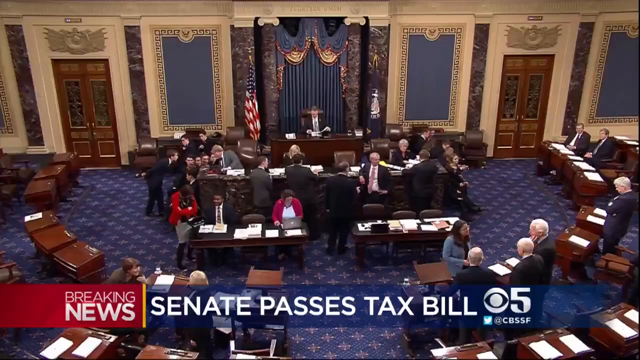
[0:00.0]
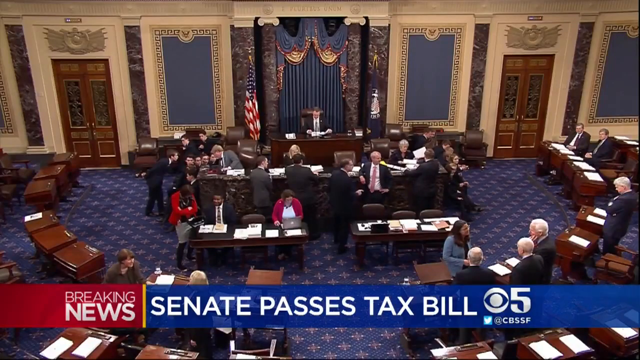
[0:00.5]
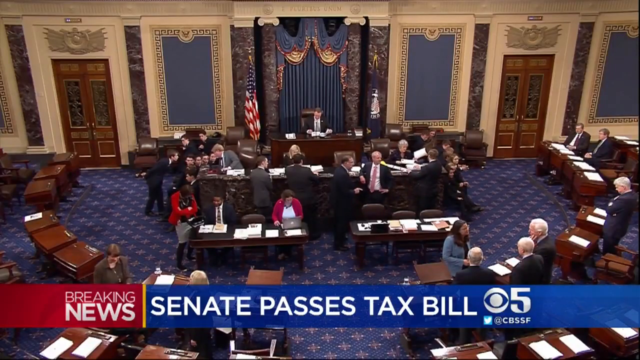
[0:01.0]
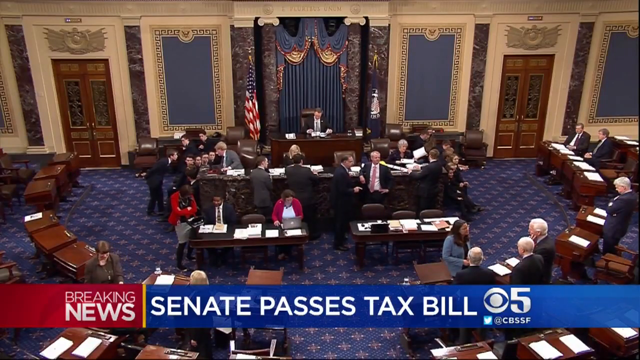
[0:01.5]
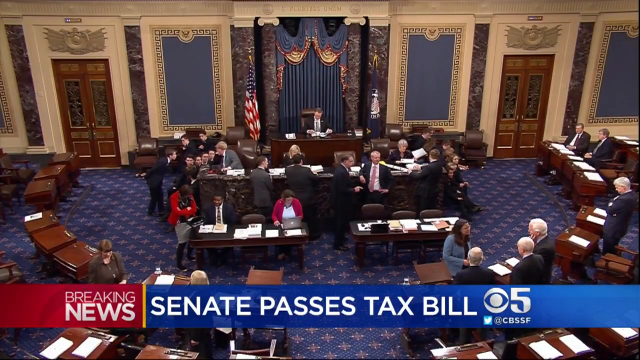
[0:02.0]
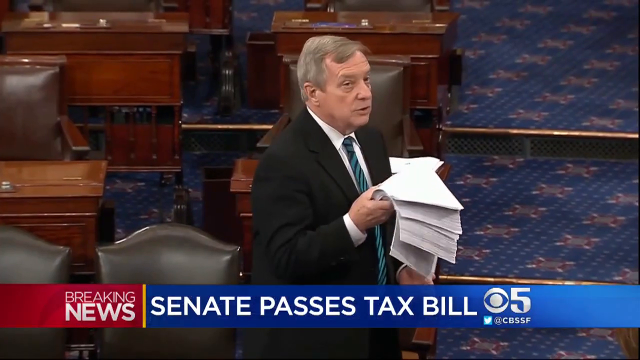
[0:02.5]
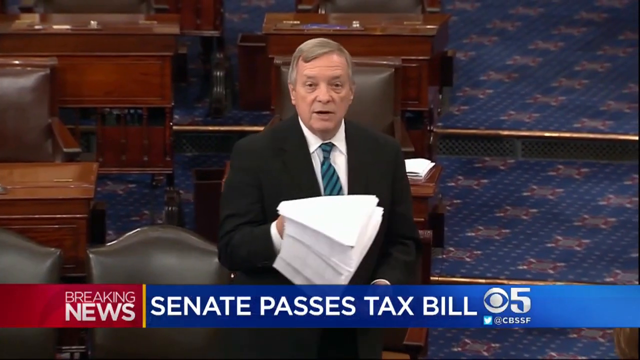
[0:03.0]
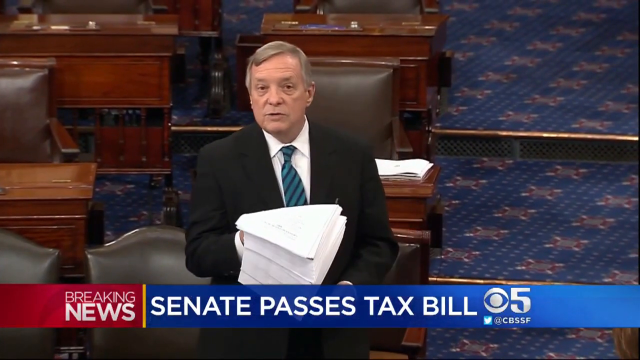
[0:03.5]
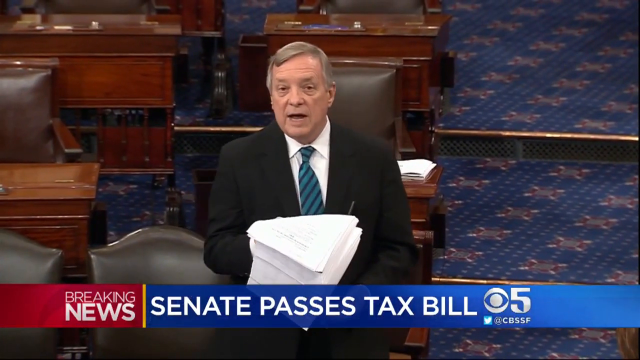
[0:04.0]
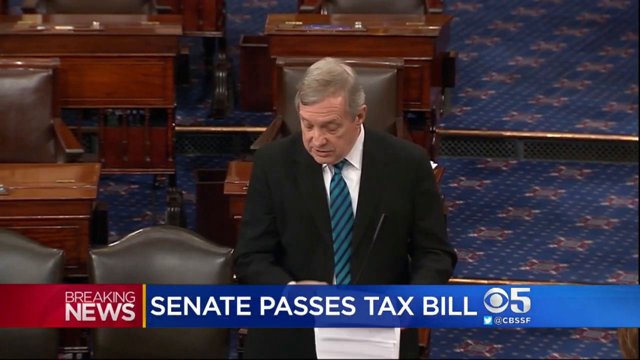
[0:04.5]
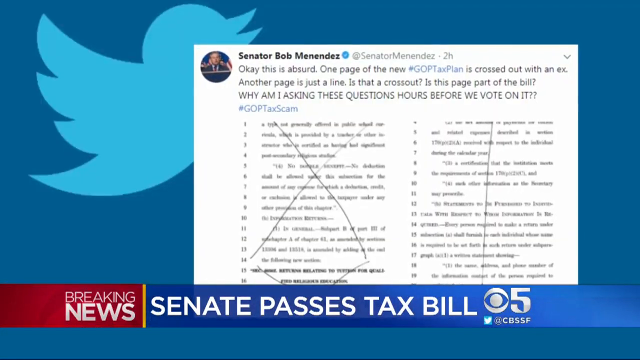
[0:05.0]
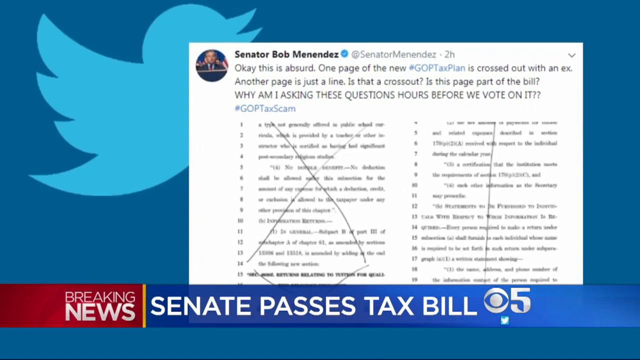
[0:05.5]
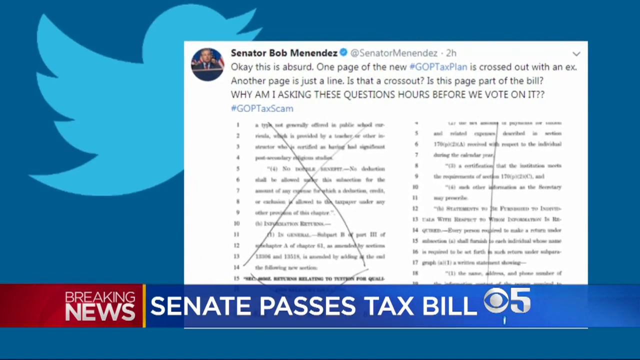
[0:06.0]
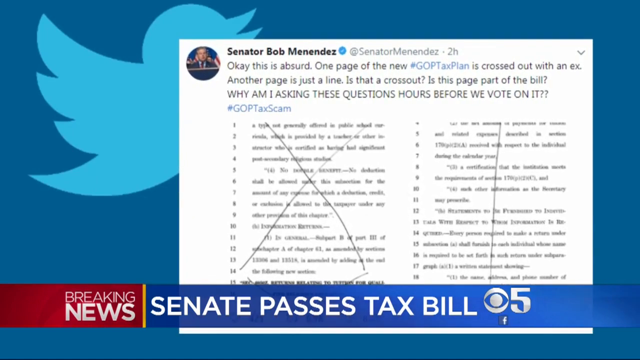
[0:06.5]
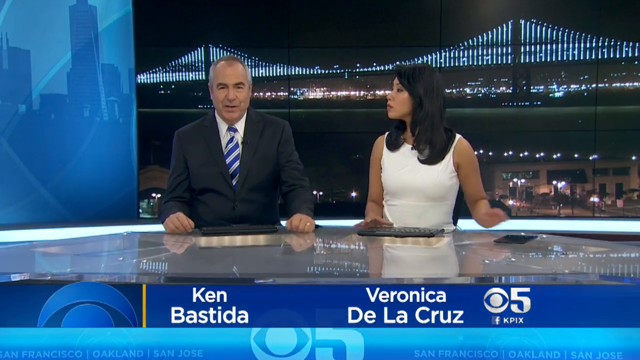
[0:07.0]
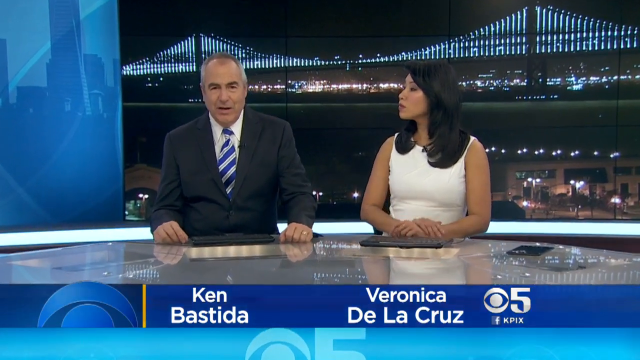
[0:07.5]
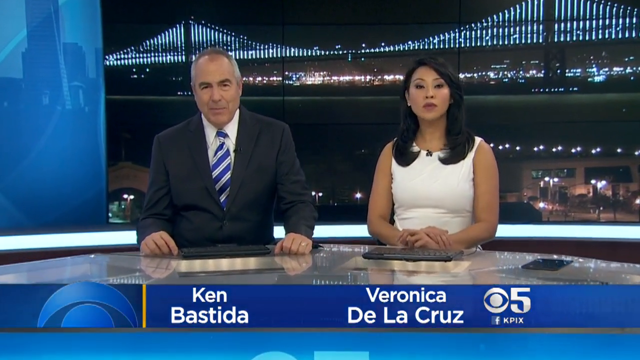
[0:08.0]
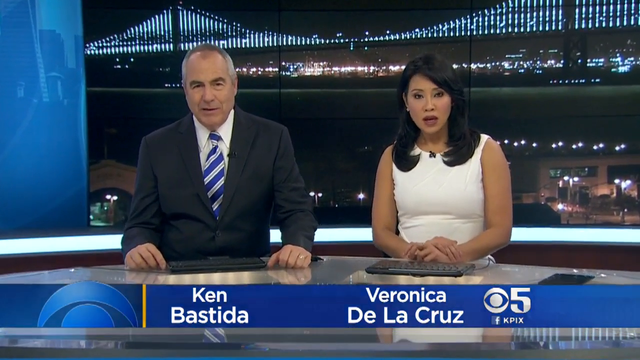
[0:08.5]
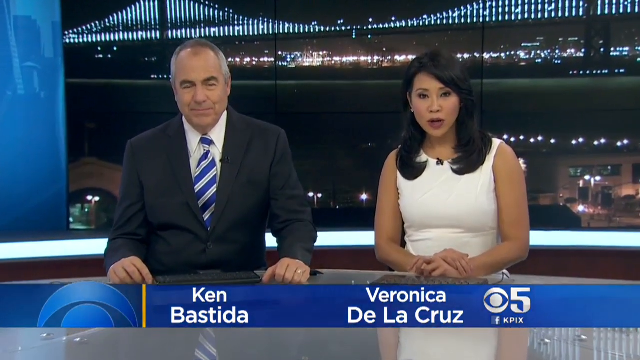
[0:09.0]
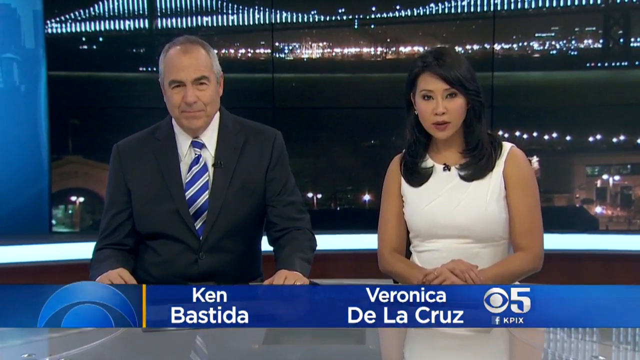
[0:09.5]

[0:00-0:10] A news broadcast shows a CBS logo with a 5 in the lower right corner. White text reading "Senate passes tax bill" appears on a blue background, and "breaking news" appears on the left side on a red background. Politicians on Capitol Hill are holding papers. One politician wears a black suit and a tie in two different shades of green, and he holds a stack of papers in his right hand, apparently the tax bill, while he talks. A pop-up appears reading "Senator Bob Menendez" with the text: "okay this is absurd one page of the new GOP tax plan is crossed out with an X another page is just a line is that a cross out is this page part of the bill why am I asking these questions hours before we vote on this?"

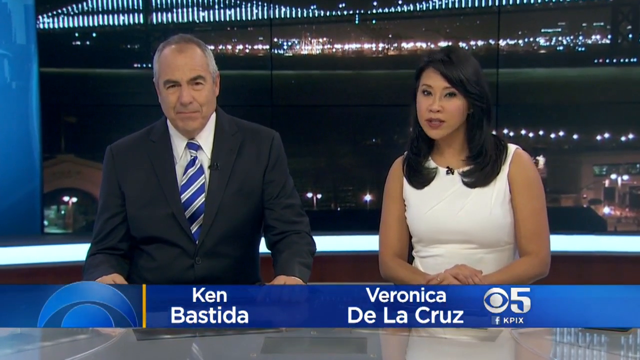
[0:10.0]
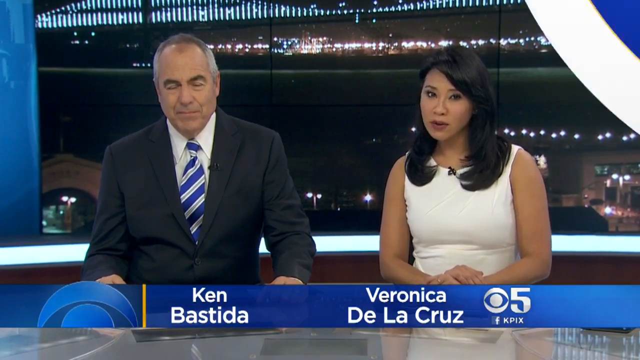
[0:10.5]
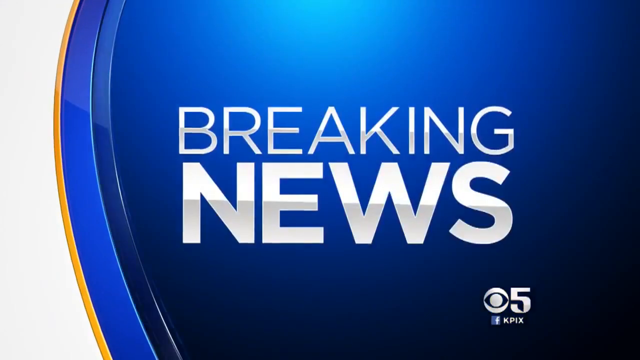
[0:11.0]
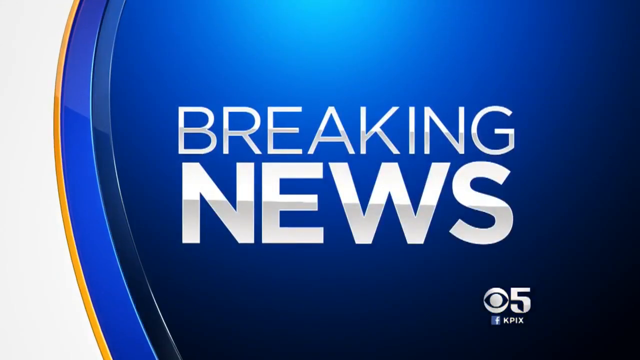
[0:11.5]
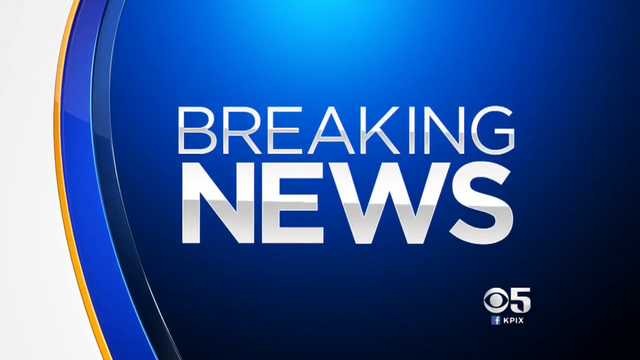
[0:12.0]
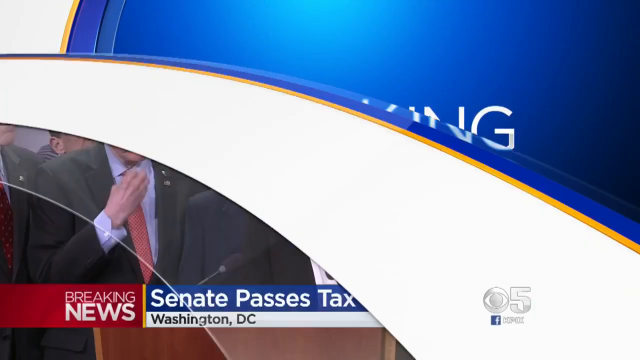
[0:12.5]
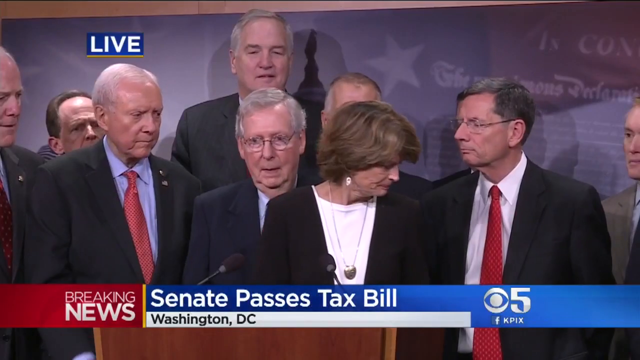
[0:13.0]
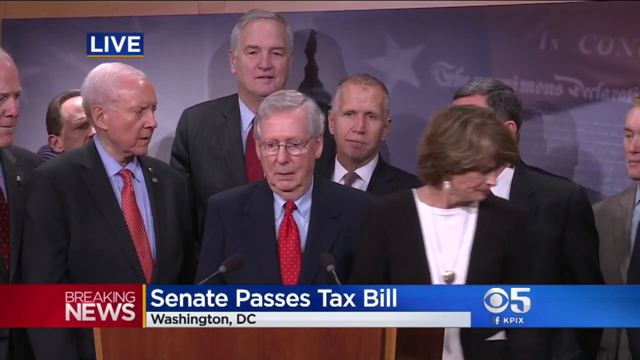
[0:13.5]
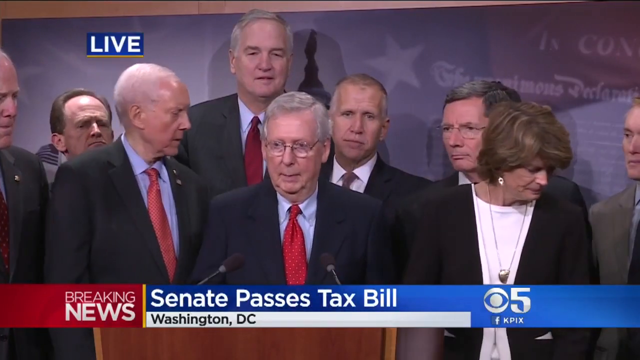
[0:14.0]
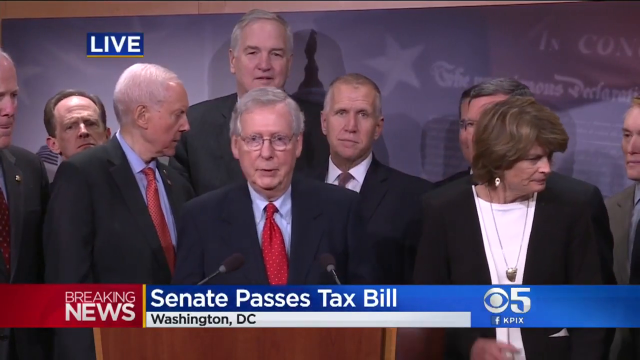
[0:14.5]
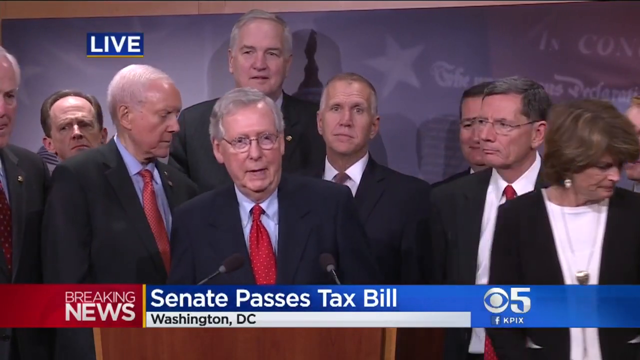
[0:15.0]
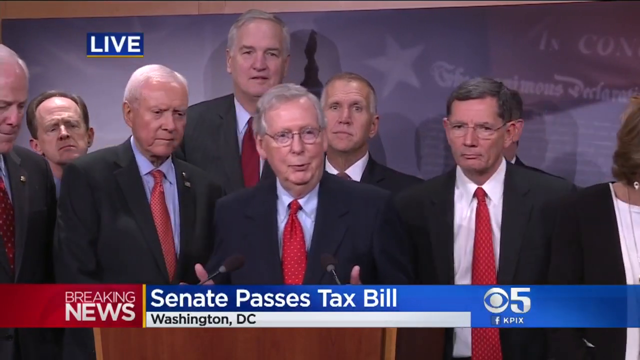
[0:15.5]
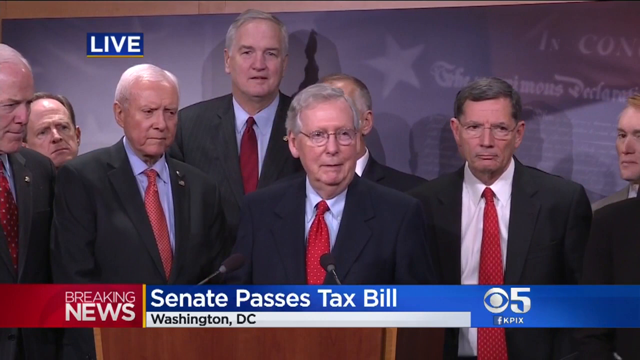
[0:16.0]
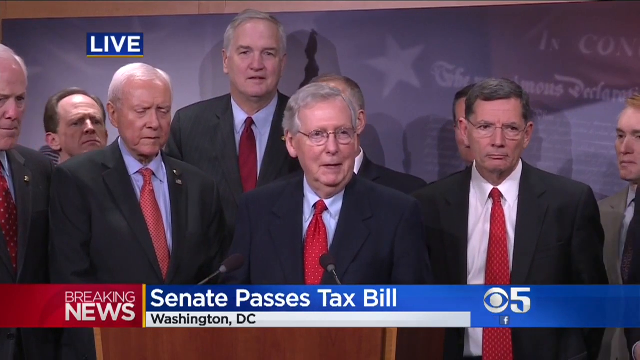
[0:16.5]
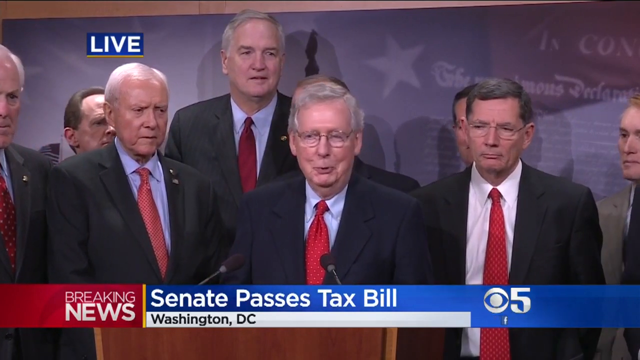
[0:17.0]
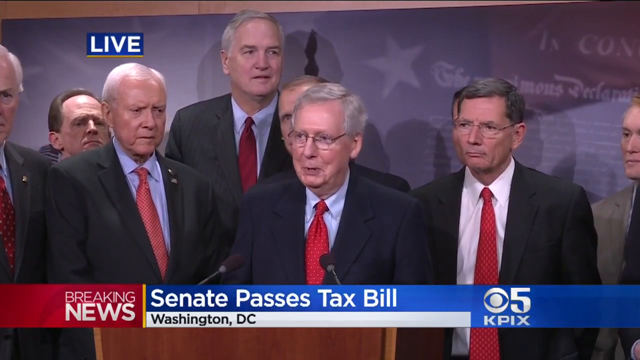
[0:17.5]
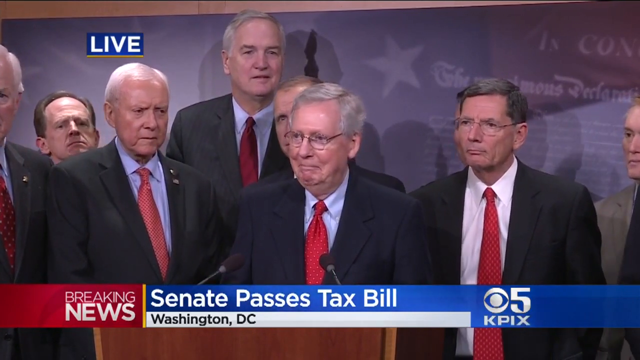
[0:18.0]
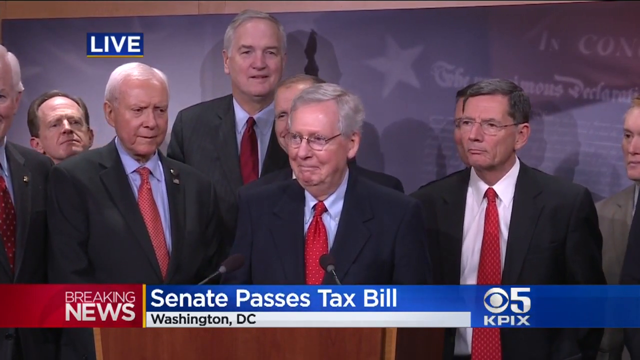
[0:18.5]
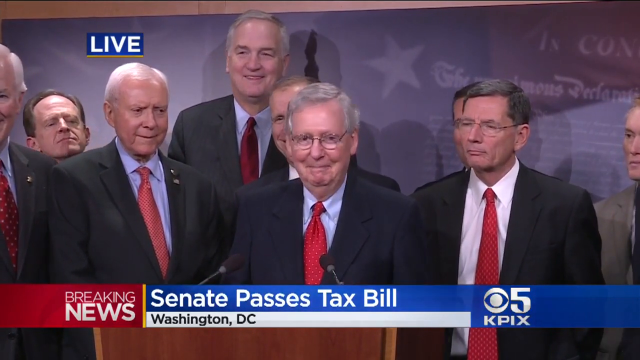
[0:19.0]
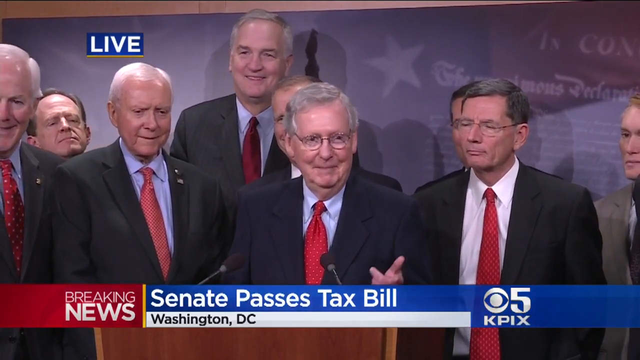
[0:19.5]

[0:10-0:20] Two news correspondents are on screen. The one on the right is labeled "Veronica" with "De La Cruz" underneath. She wears a white sleeveless dress with her mic clipped to the top middle of the dress, and her black hair is layered, curled, and falls a little past her shoulders. The one next to her is labeled "Ken" with "Bastida" underneath. He wears a black suit, a white and blue striped tie, and a white button-down collared shirt. The CBS symbol shows a 5, with "KPIX" next to the Facebook logo. On-screen text reads "Senate passes tax bill", "Washington, D.C." and "breaking news". Among the politicians shown, the men, including the speaker, mostly wear red ties, and one person in the back row wears a gray tie.